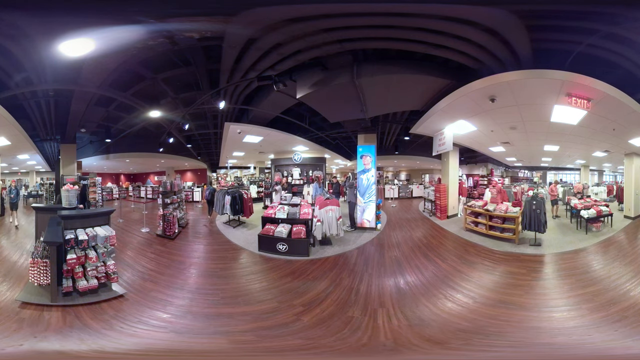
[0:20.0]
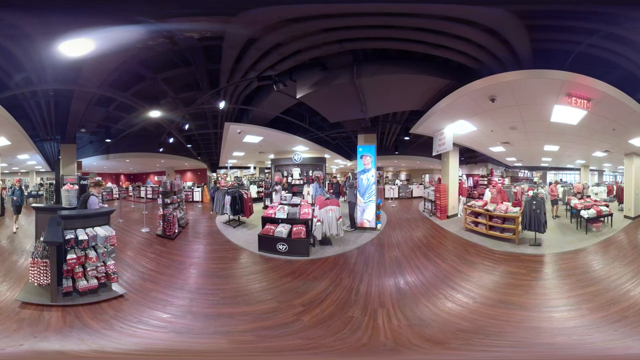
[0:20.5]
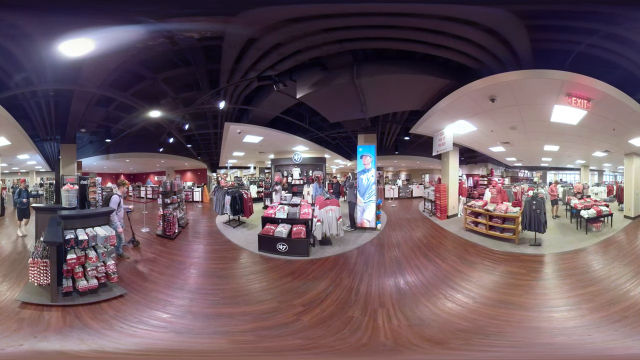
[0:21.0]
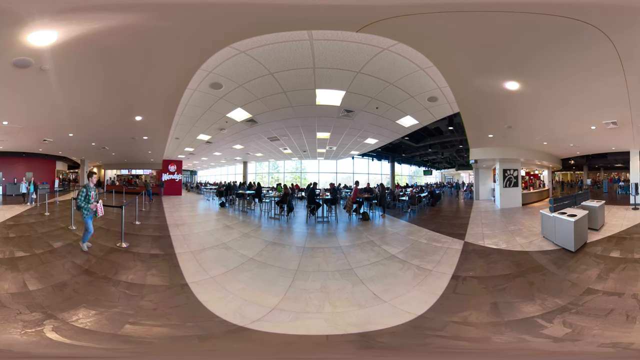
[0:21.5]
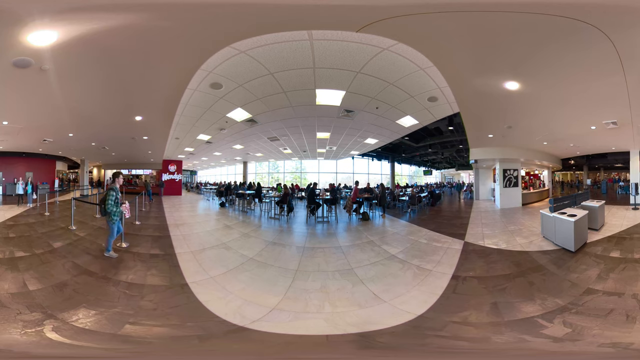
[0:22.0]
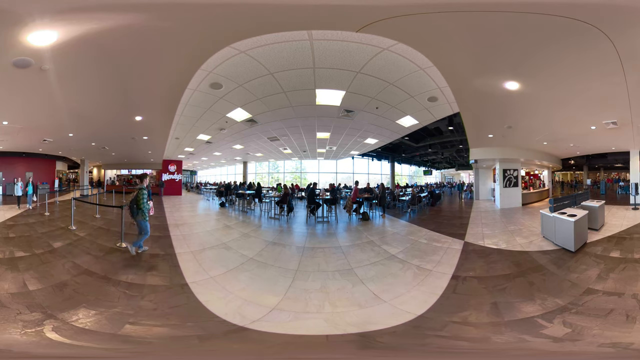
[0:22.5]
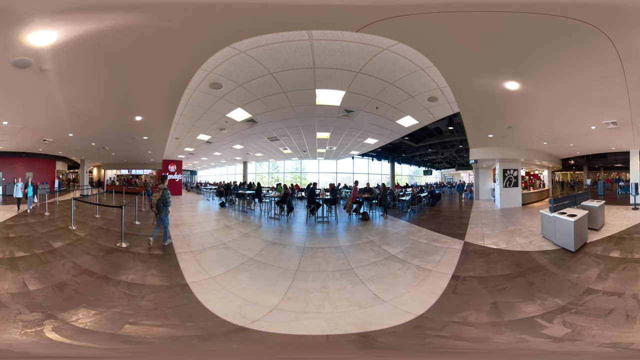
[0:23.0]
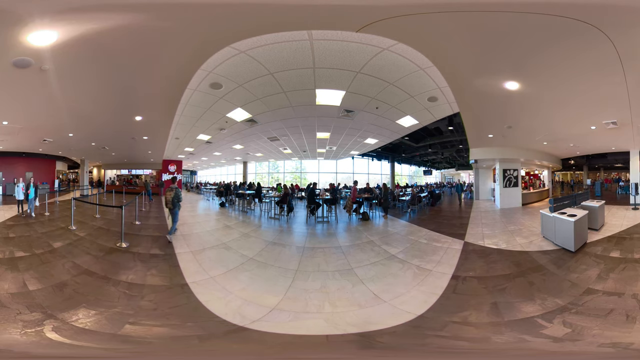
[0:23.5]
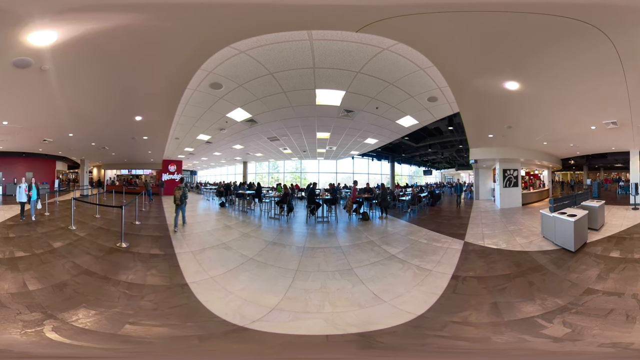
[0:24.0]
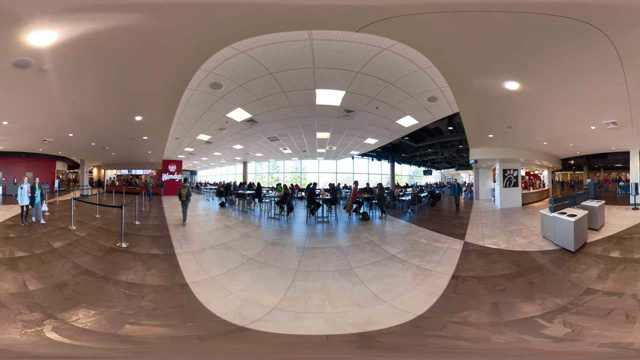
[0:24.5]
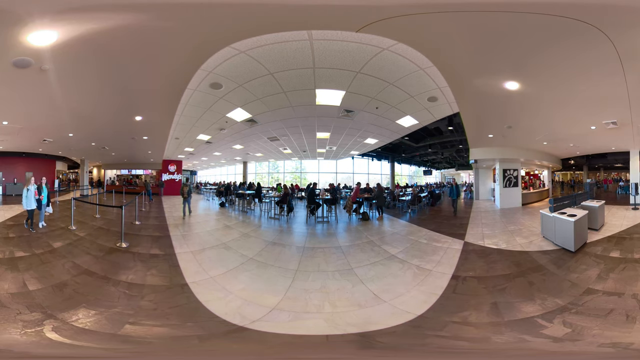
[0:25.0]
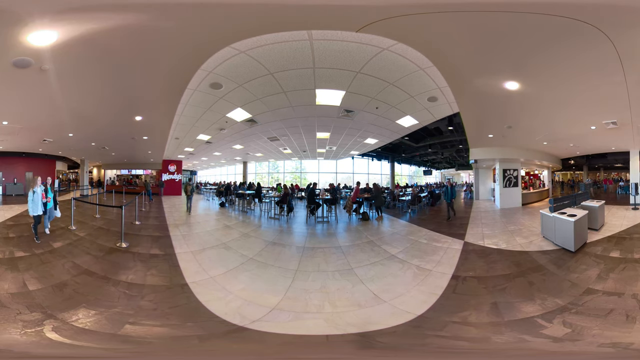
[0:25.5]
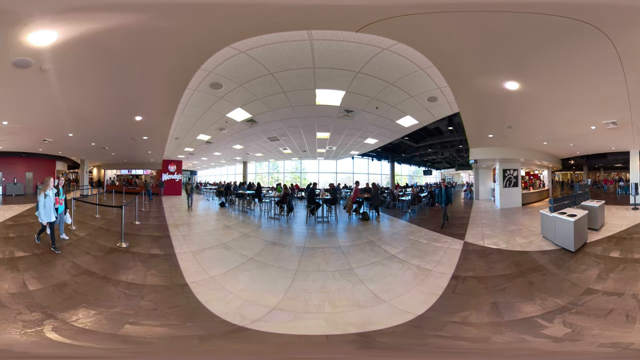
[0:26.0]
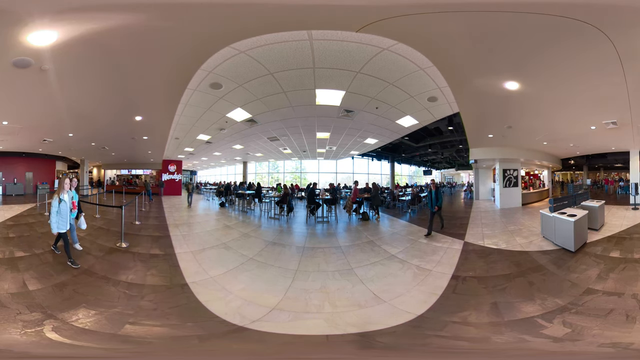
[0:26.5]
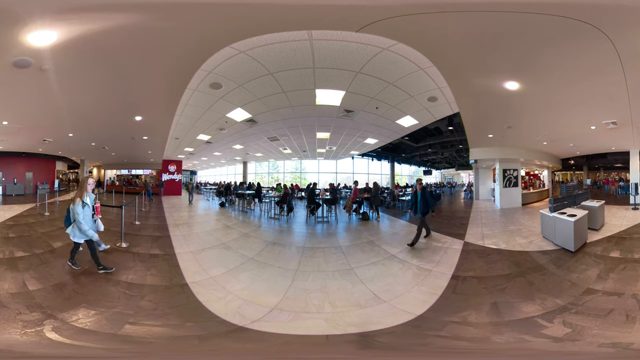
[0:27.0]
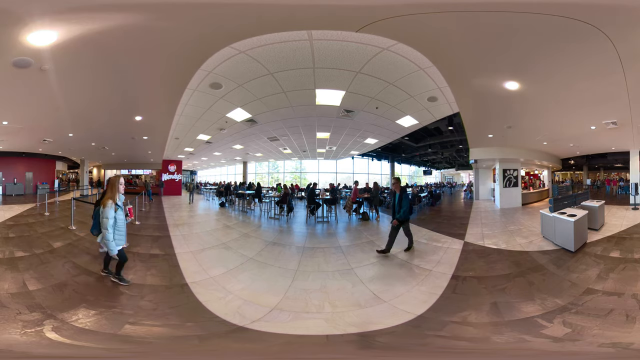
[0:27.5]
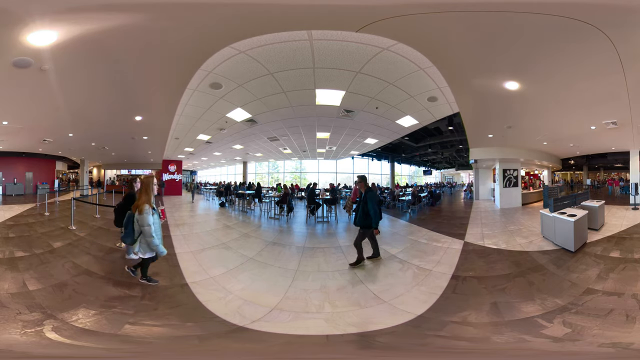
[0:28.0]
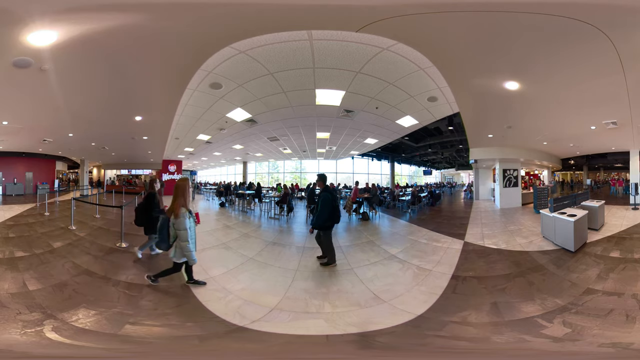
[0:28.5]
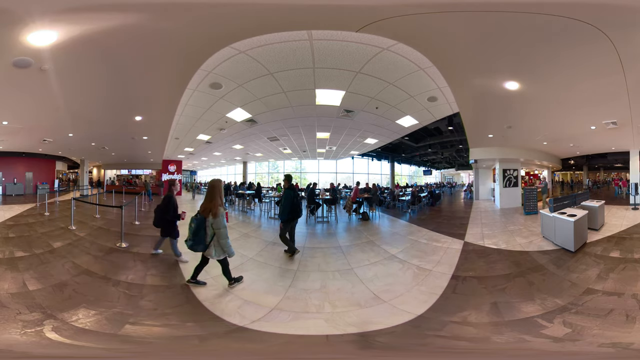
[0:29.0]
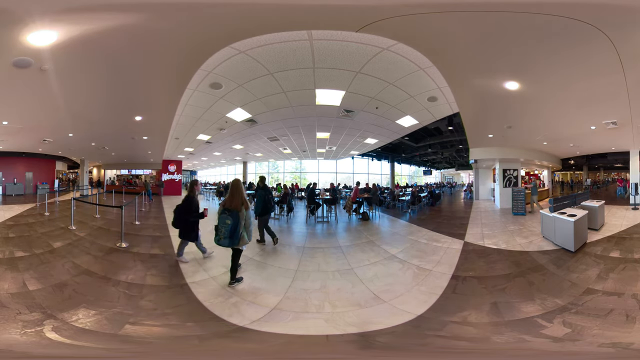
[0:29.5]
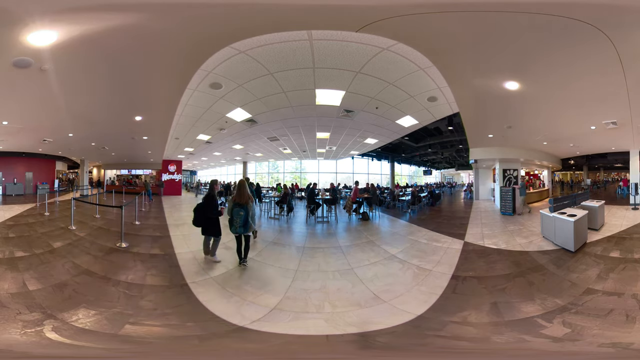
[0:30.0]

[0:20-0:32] The store is shown, with shirts folded on a table and clothes hanging on racks; it seems to be a sports-related store. The scene then moves to what appears to be a cafeteria, with a lot of students sitting at tables. People seem to be sitting across from each other and talking. There are all kinds of tables, a few of them seemingly different sizes. It appears to be some type of university, a very nice, clean campus inside and out. The students seem to be in their early 20s; some walk around and many are at tables, and most, if not all, of the tables seem to be full.